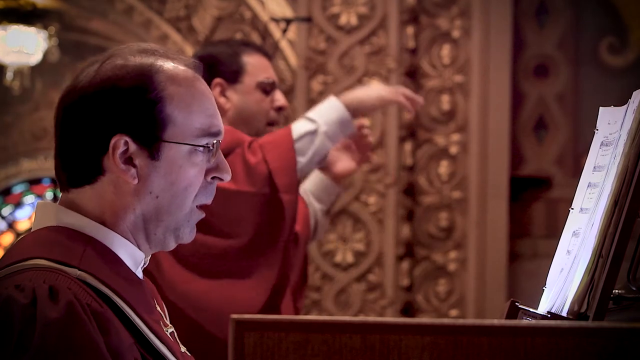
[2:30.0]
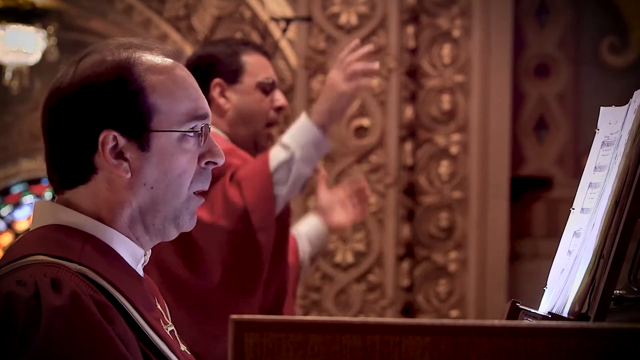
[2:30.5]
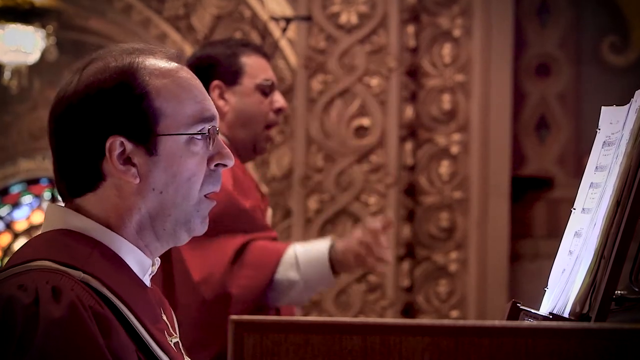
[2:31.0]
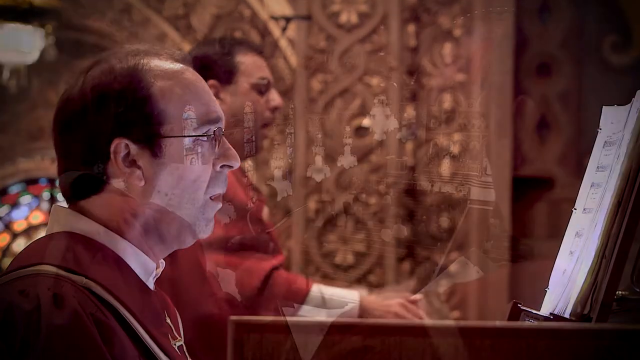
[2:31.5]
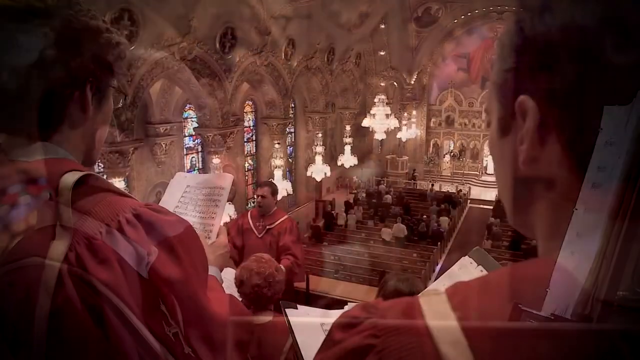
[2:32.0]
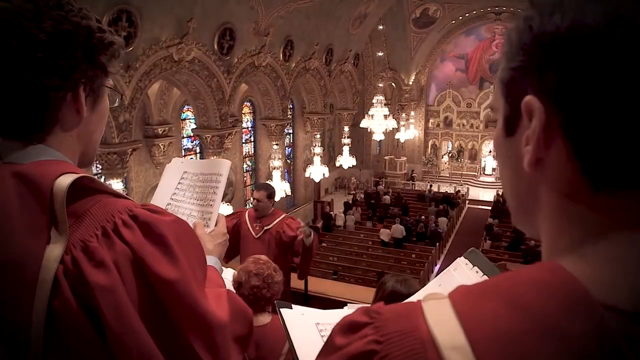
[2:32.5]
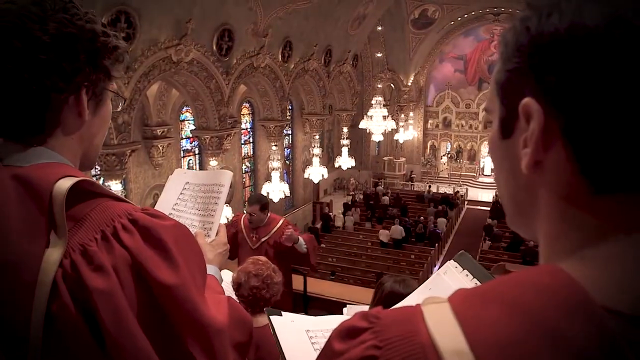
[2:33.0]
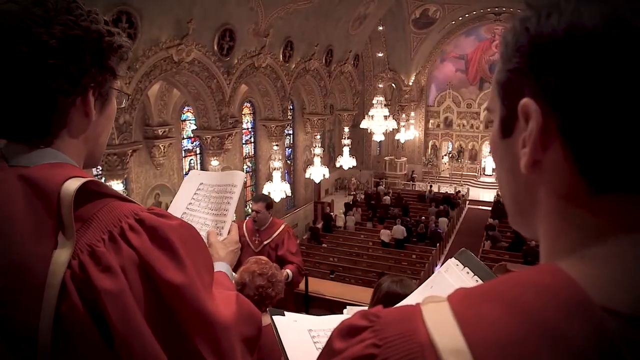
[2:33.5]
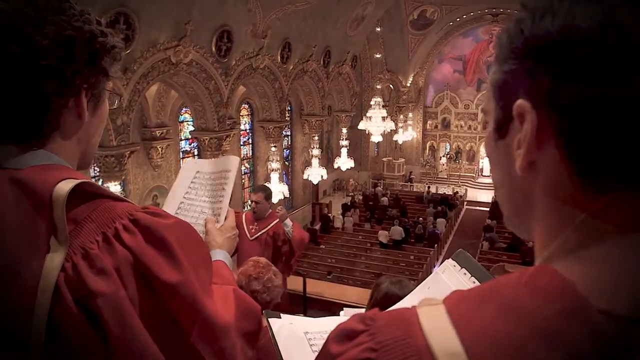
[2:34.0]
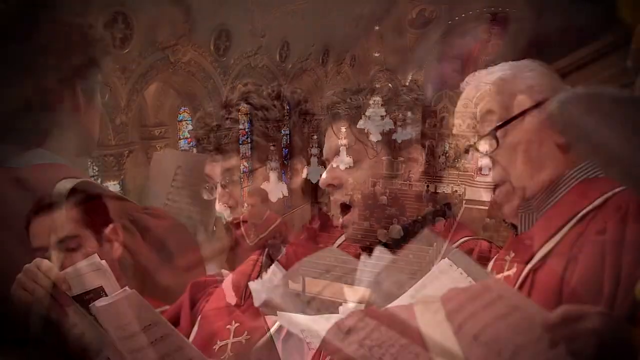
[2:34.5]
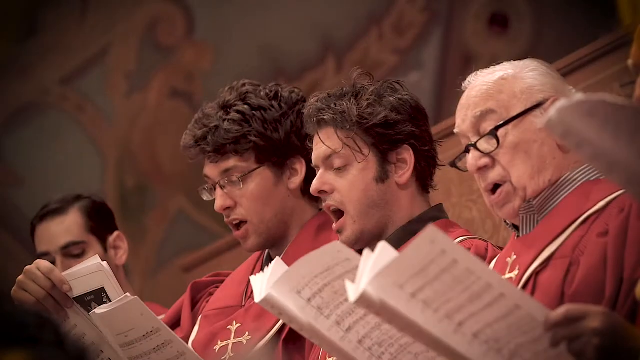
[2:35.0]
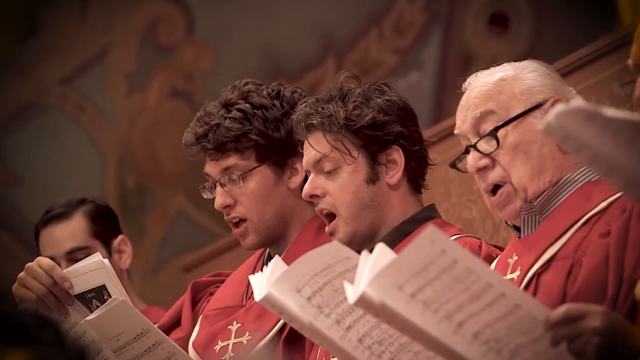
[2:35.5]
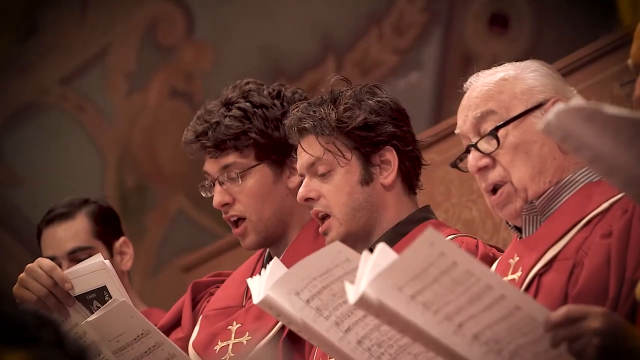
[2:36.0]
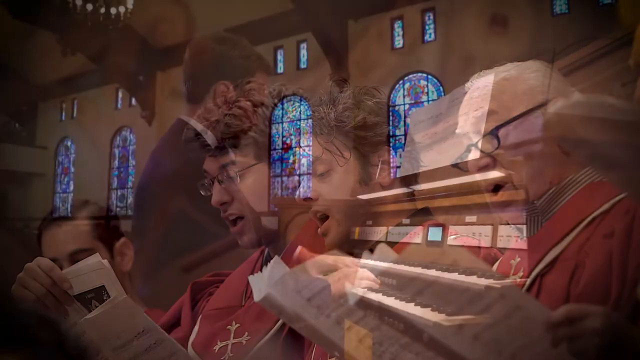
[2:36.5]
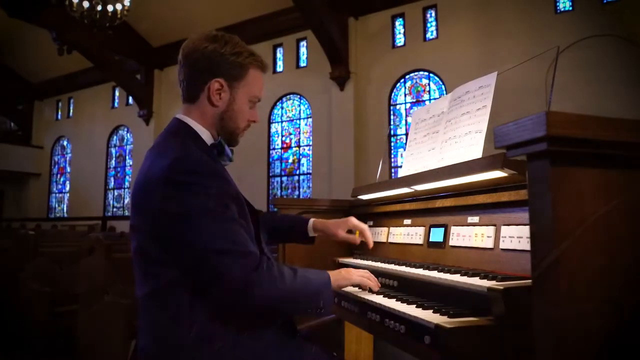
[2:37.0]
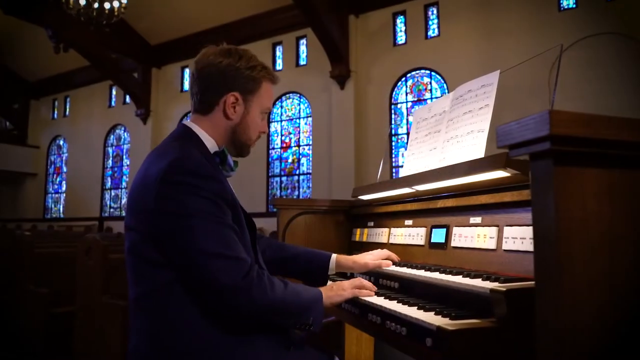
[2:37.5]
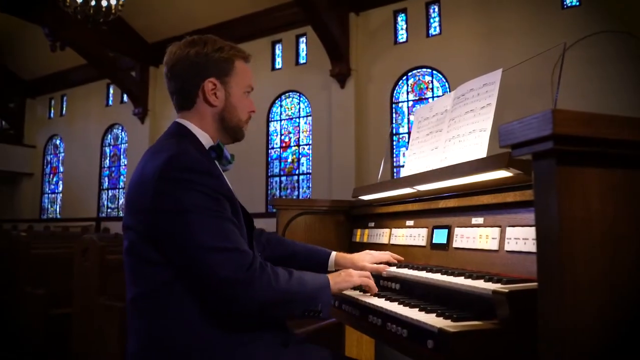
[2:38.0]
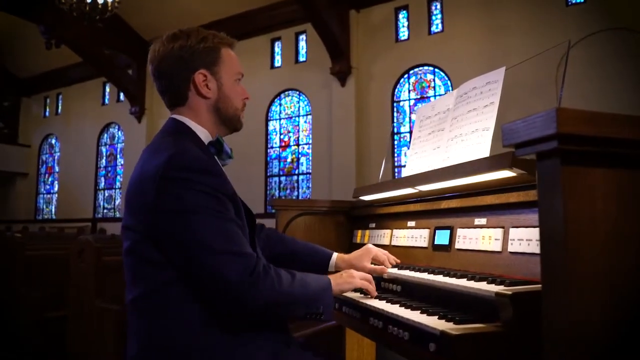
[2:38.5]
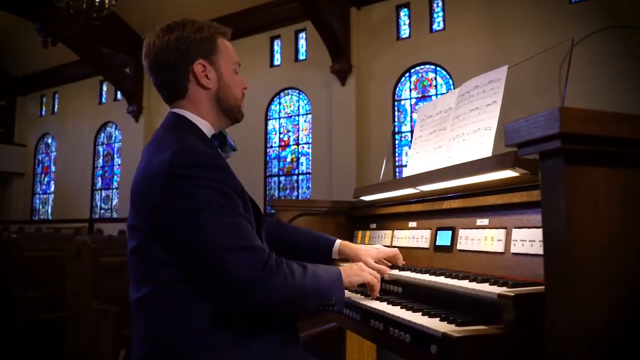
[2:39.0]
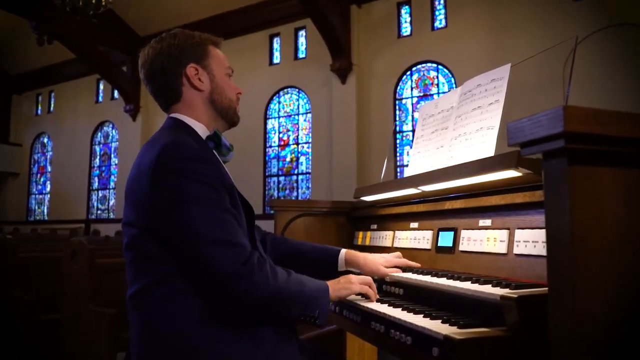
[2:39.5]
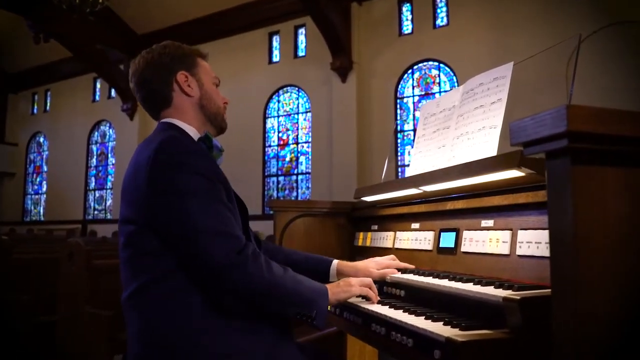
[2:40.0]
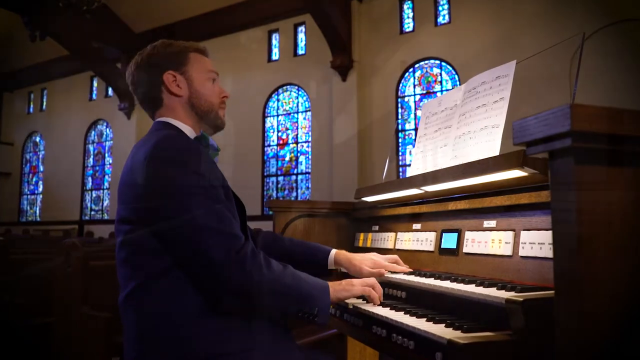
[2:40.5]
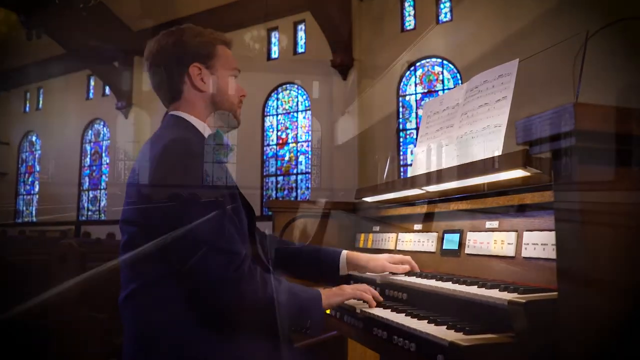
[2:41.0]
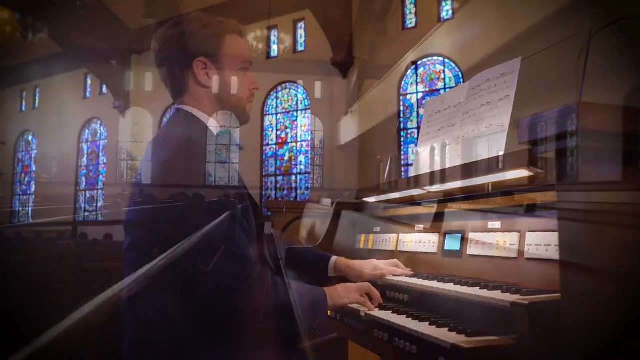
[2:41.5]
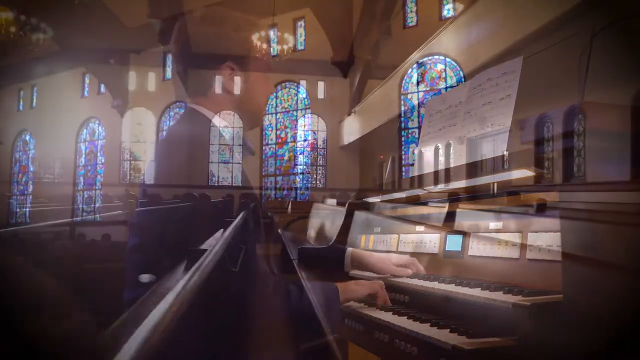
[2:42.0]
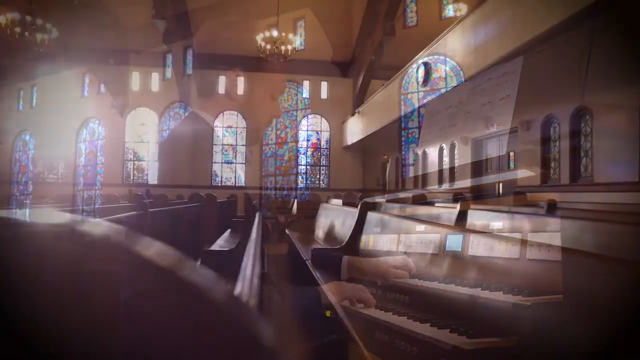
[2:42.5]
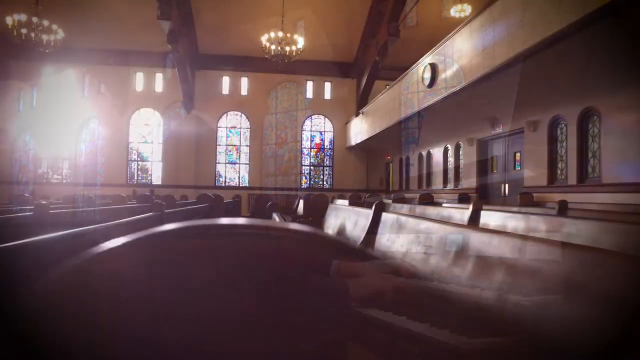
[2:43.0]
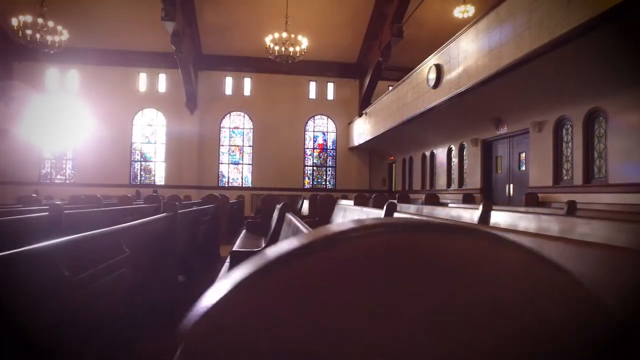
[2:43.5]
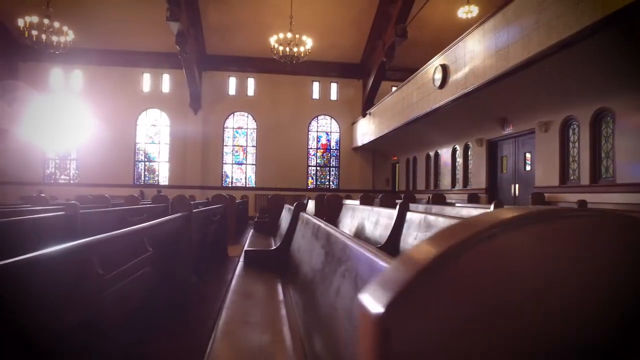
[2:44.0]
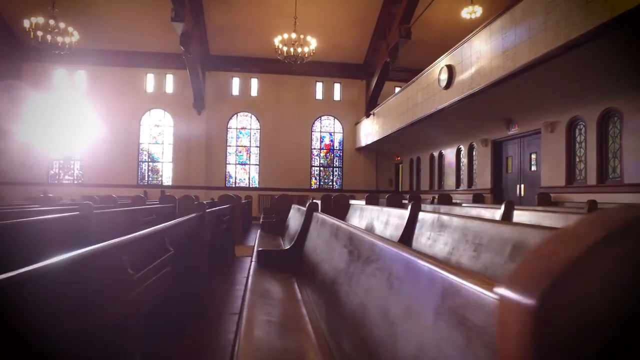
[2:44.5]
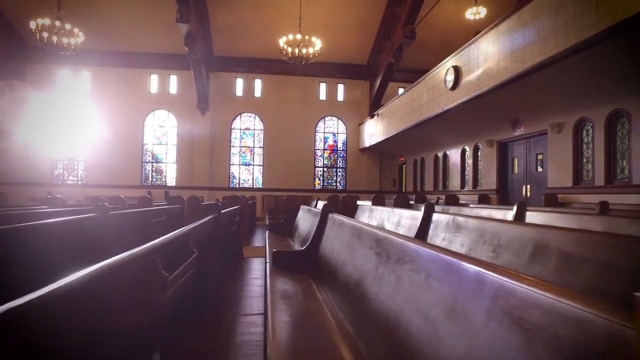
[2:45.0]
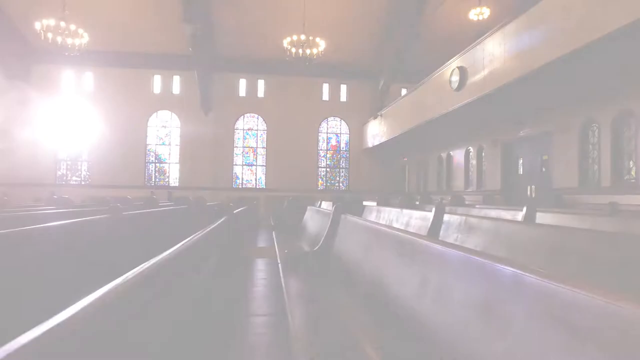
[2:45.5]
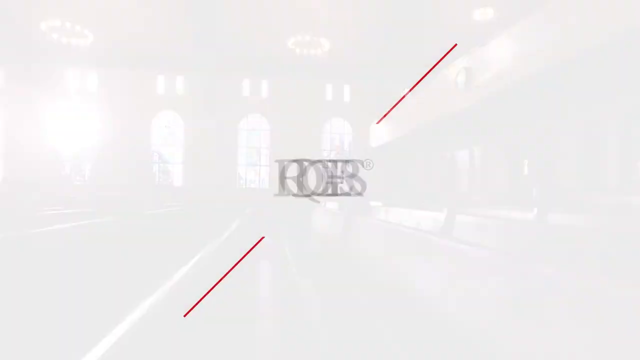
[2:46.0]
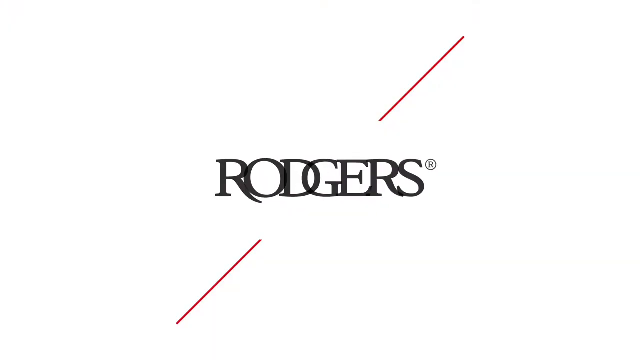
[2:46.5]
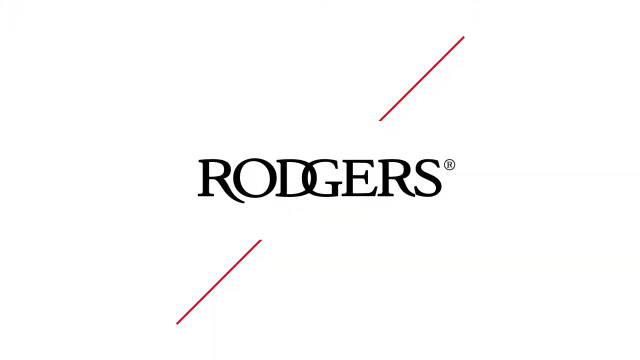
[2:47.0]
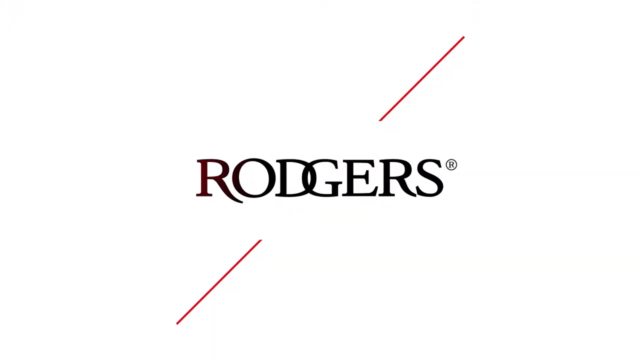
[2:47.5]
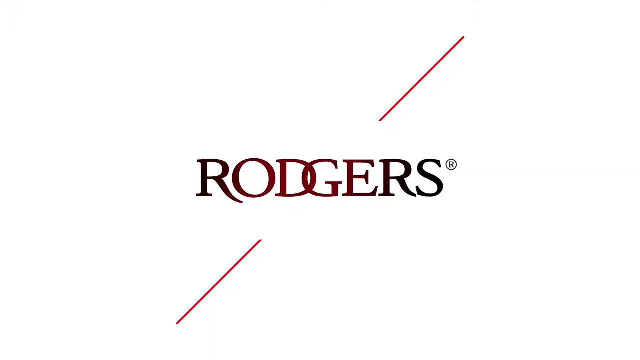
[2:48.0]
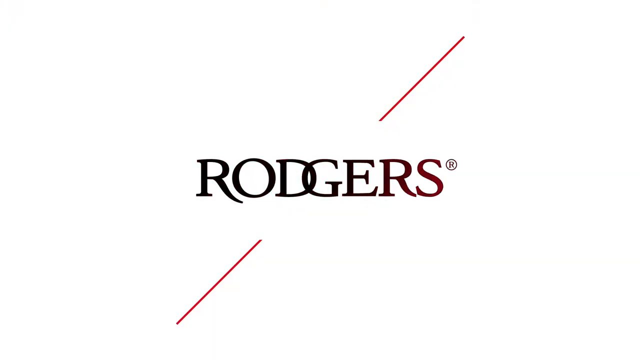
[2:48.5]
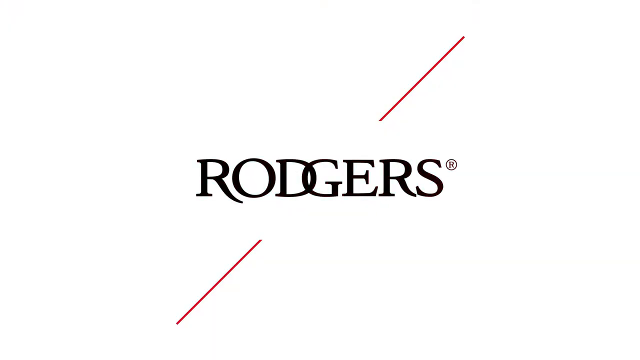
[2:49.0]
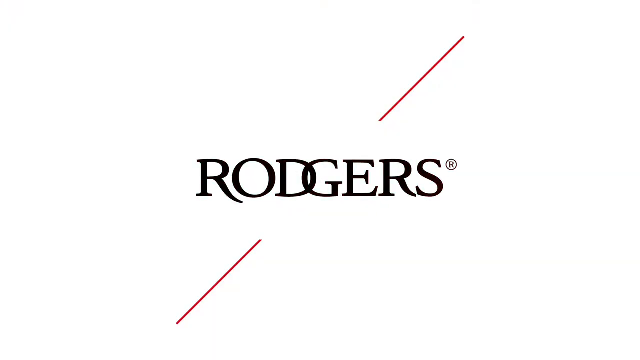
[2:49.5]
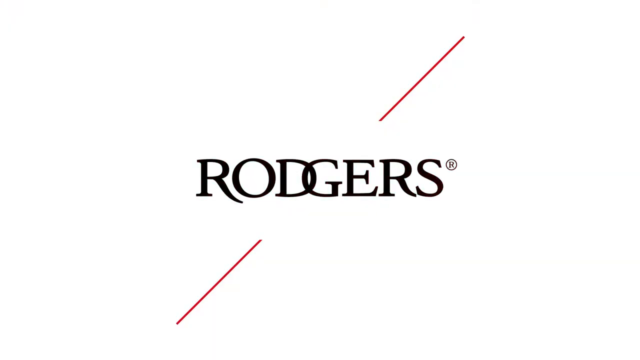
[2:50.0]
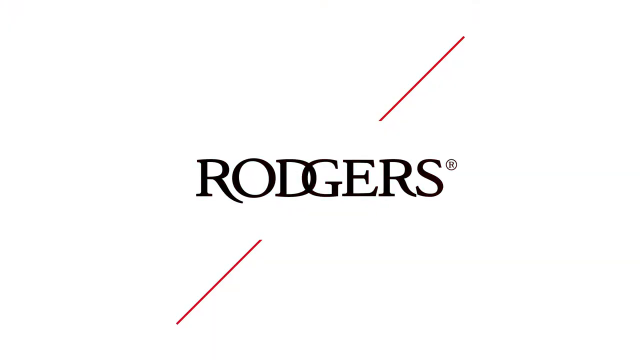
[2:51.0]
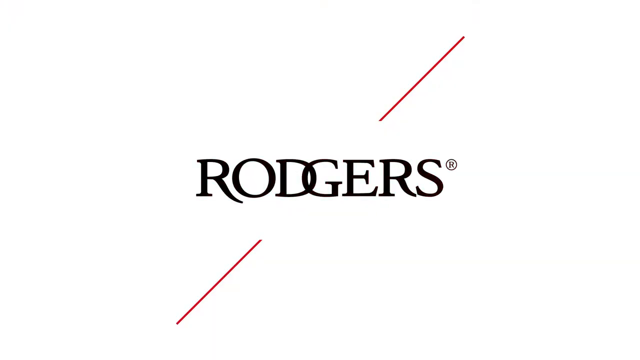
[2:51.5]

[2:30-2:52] Two men are seen in profile. The man in front is the organist, seen from the shoulders up; he has a receding hairline, dark hair in the back, and glasses, and he stares at organ music in front of him, his mouth slightly open. Behind him, also on the right, is the chorus conductor in a red robe with white sleeves sticking out below it; his hands are raised as he conducts the choir, and he sings along with them. Then the conductor is seen from the front, from behind in the choir, over the shoulders of singers who are holding music. Further down is the front of the church, where parishioners stand in the pews. The church is ornate, with a series of arches down the left-hand side and a large arch at the front where the crucifix is. A close-up shows four men singing and looking at their music. The view goes back to an organist, now wearing a blue suit and a bow tie, with his hands on the upper and lower keyboards, his left hand on the upper one, staring at the music propped up in front of him. The camera then goes down and pans through the downstairs where the pews are, with many arched stained-glass windows on one side.